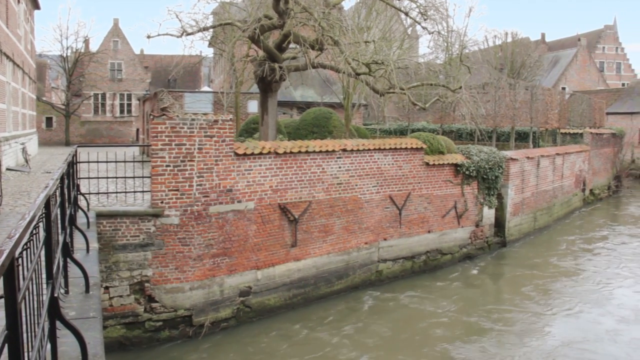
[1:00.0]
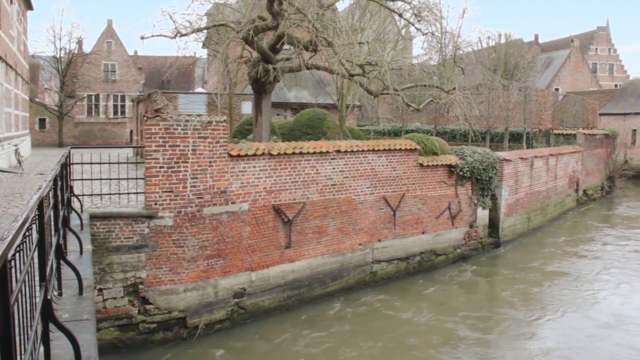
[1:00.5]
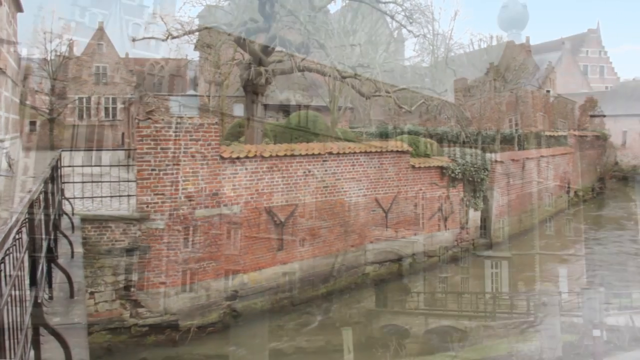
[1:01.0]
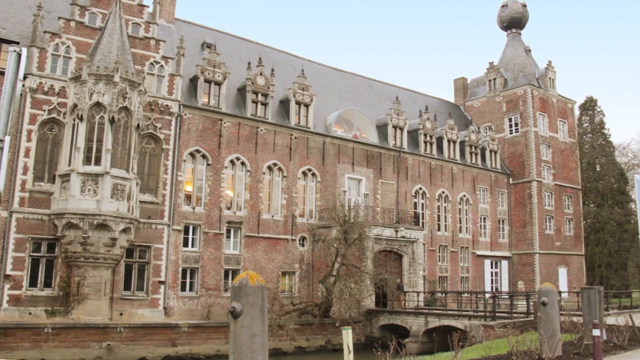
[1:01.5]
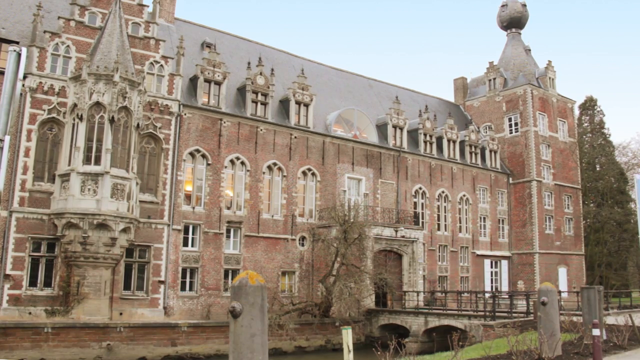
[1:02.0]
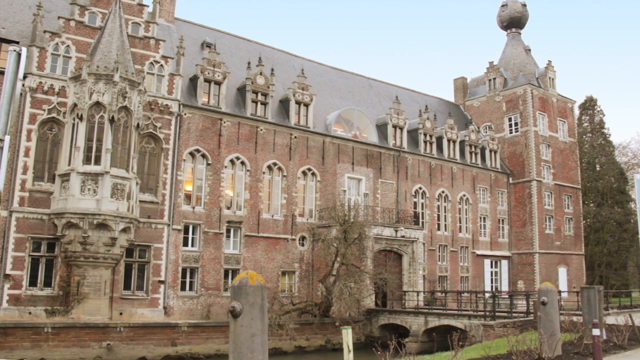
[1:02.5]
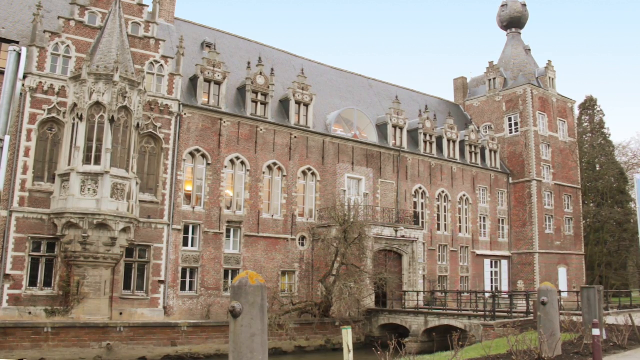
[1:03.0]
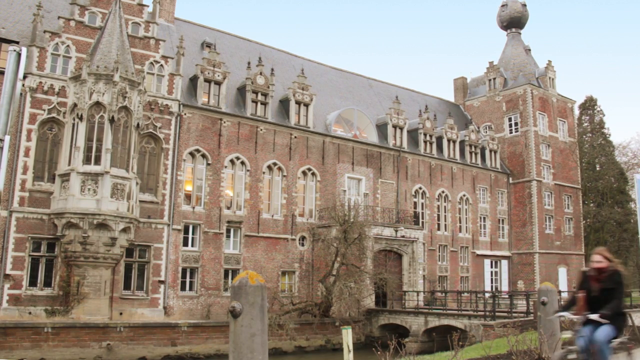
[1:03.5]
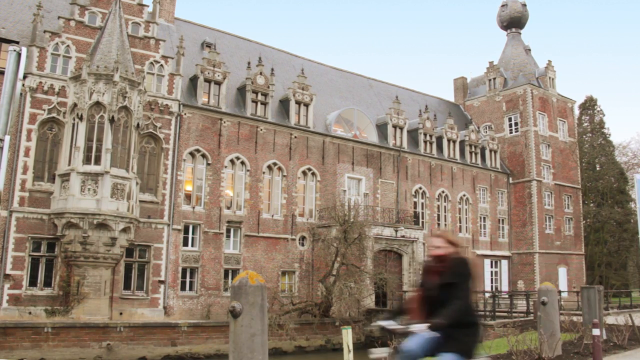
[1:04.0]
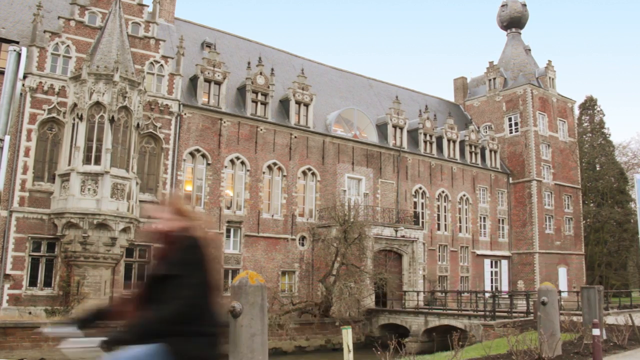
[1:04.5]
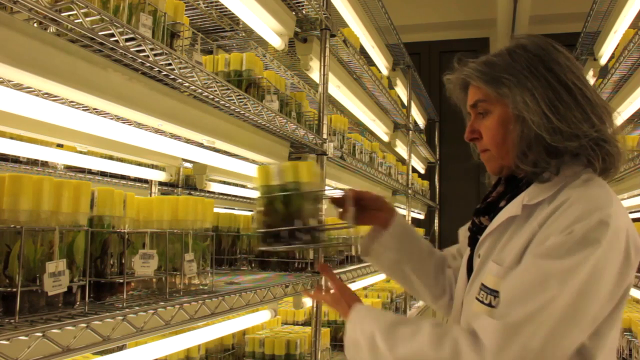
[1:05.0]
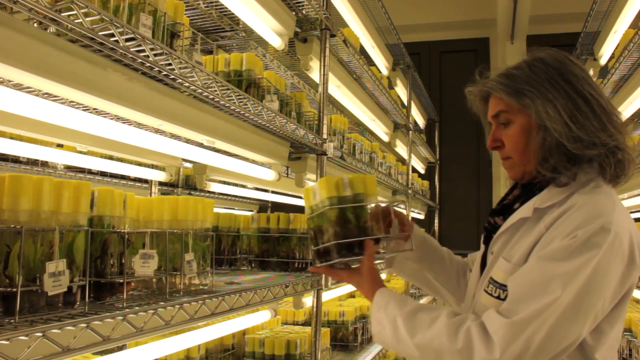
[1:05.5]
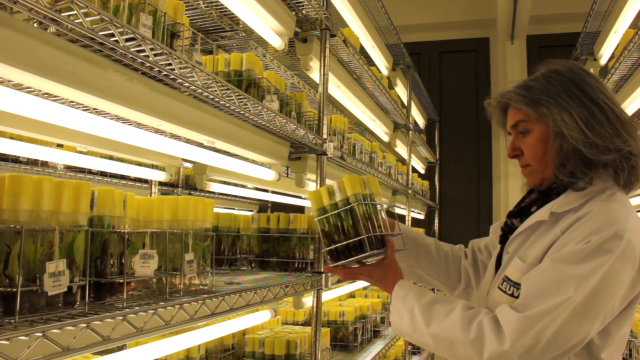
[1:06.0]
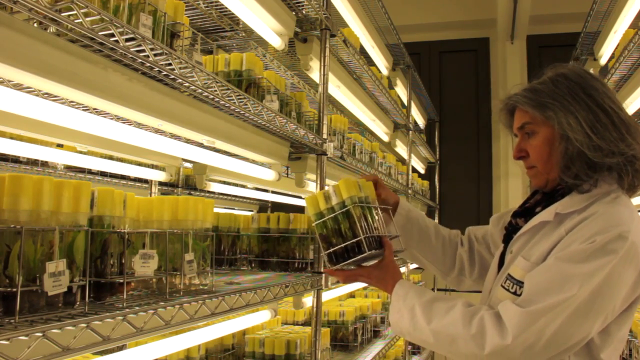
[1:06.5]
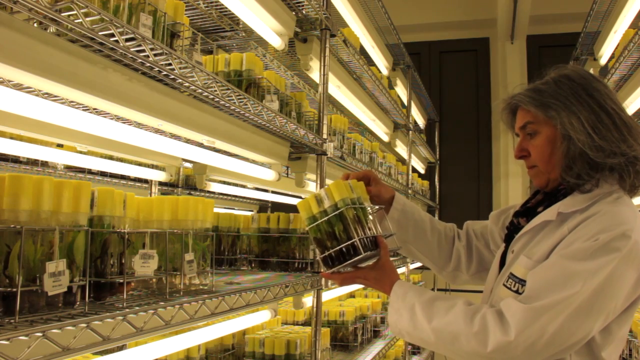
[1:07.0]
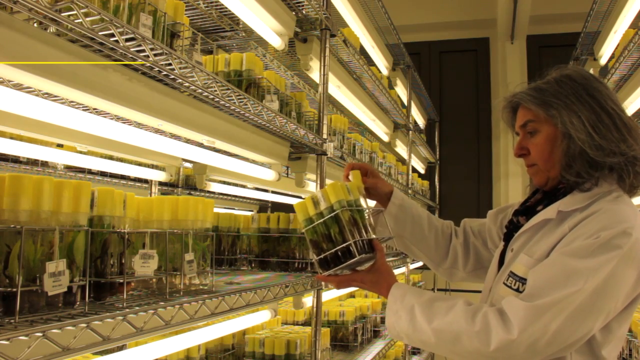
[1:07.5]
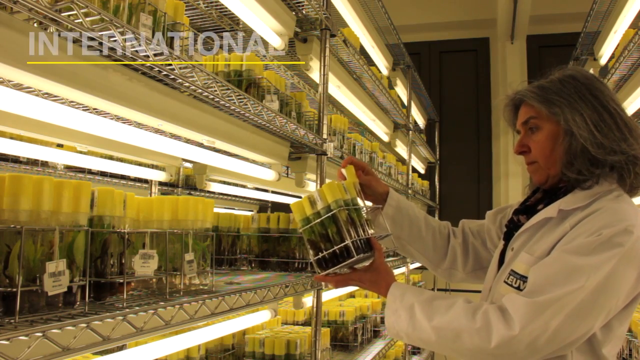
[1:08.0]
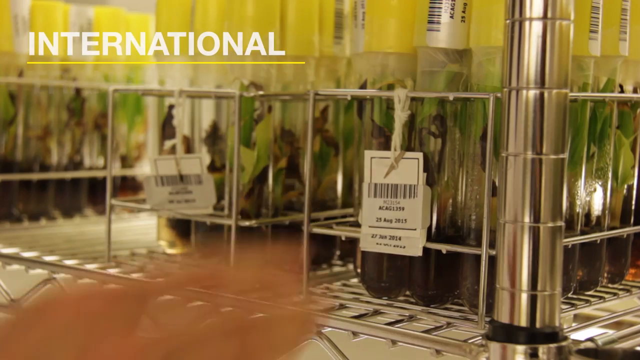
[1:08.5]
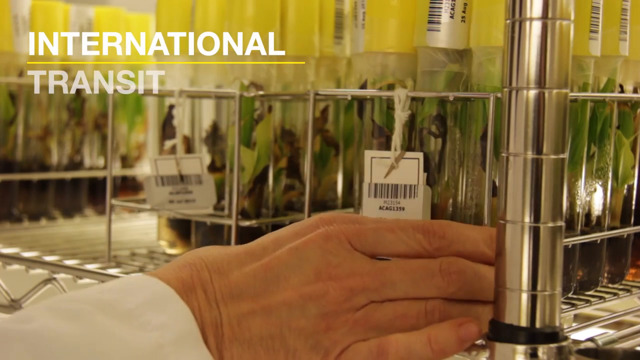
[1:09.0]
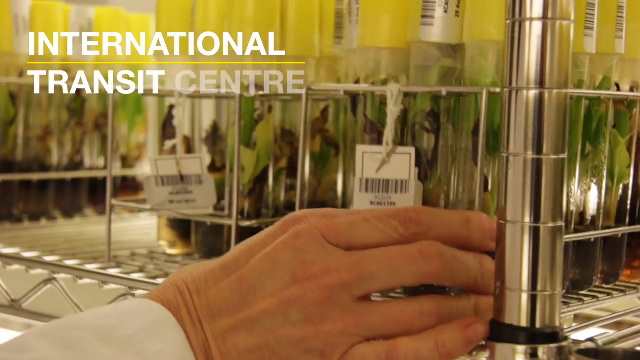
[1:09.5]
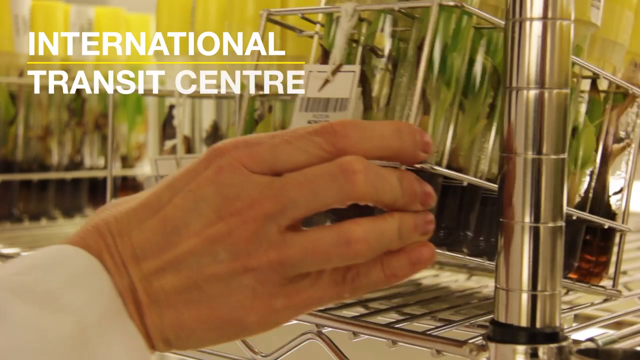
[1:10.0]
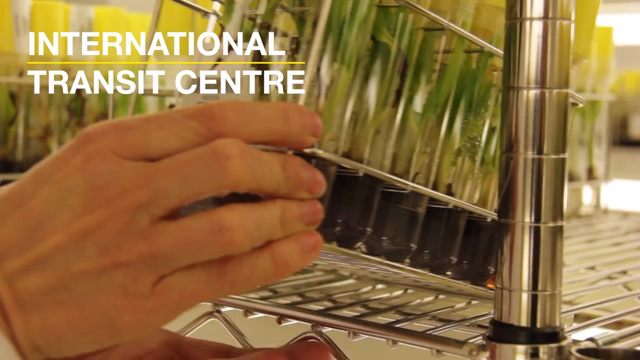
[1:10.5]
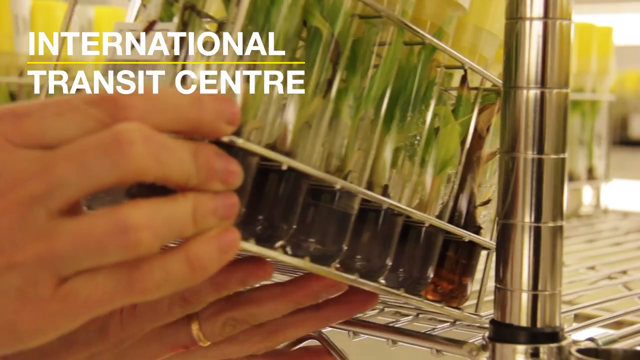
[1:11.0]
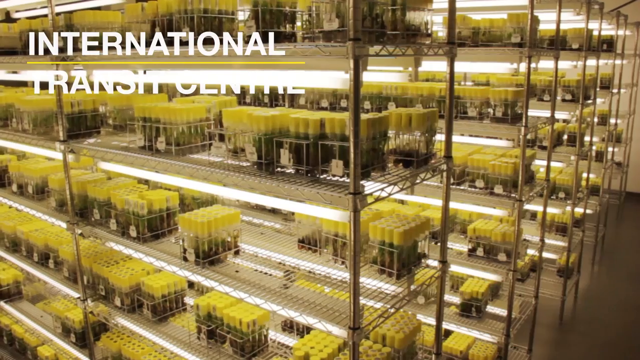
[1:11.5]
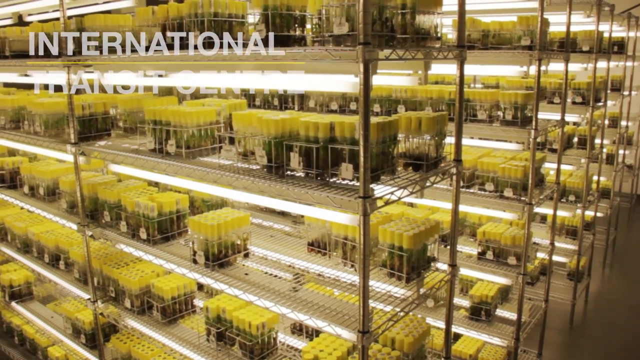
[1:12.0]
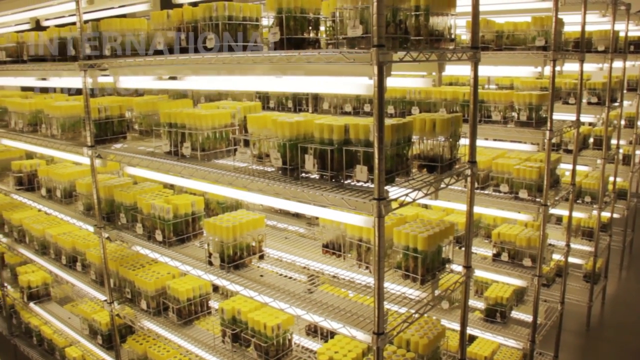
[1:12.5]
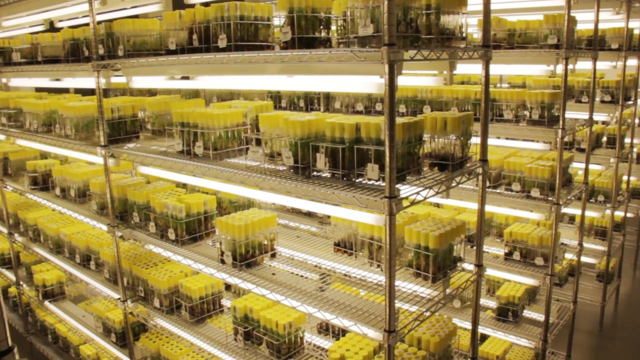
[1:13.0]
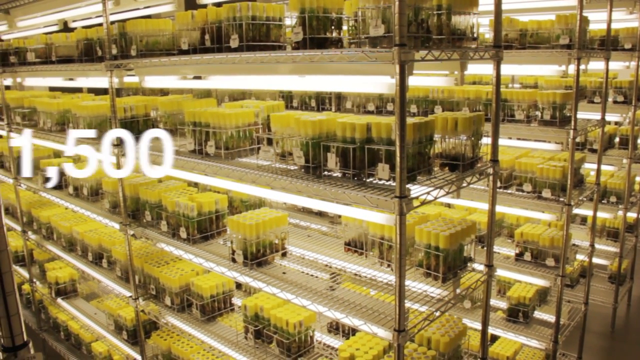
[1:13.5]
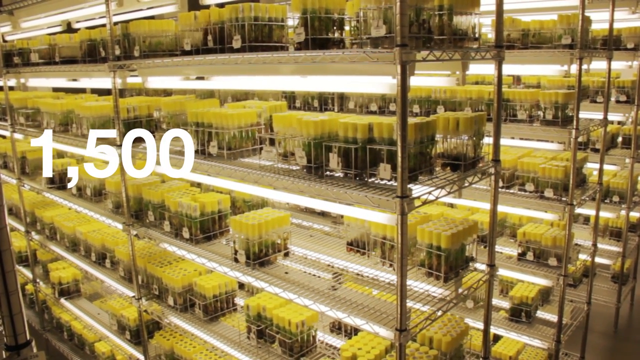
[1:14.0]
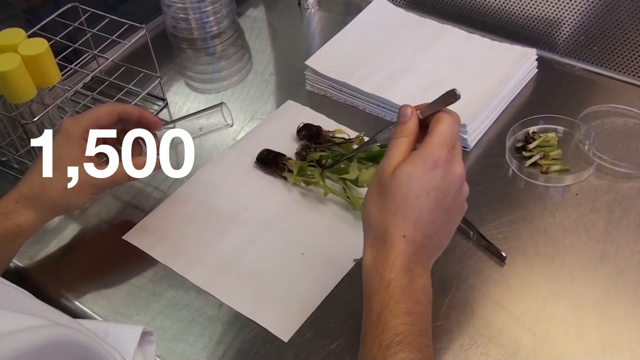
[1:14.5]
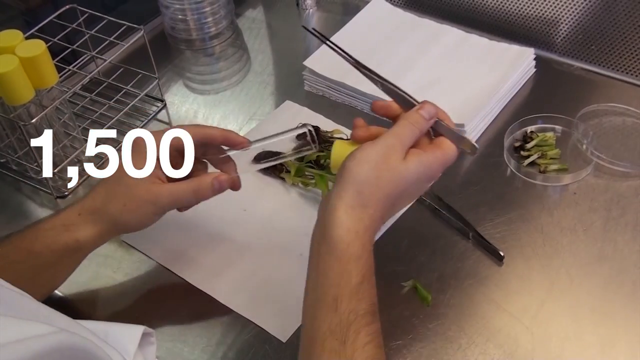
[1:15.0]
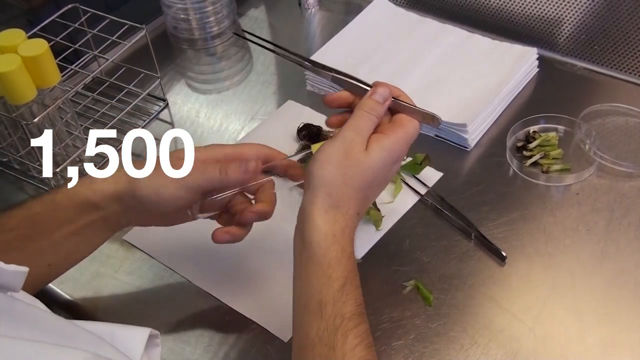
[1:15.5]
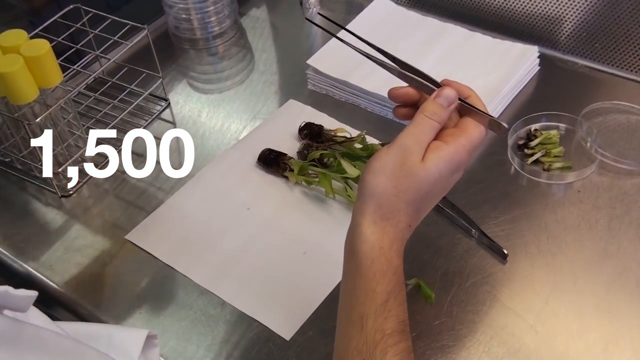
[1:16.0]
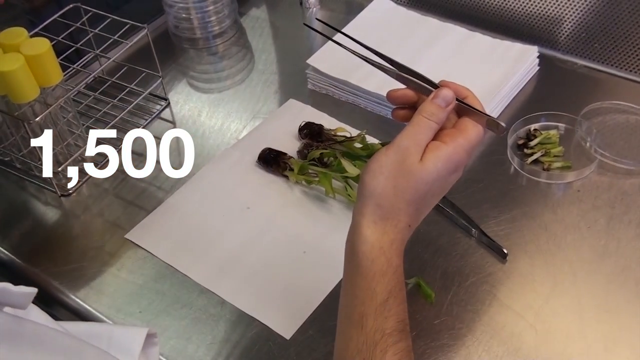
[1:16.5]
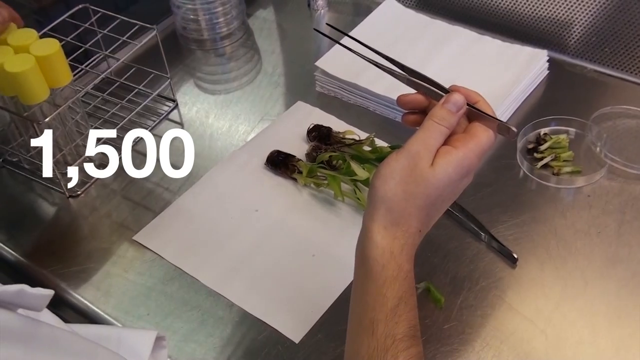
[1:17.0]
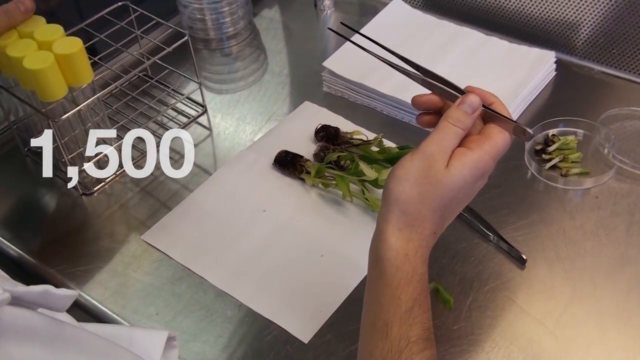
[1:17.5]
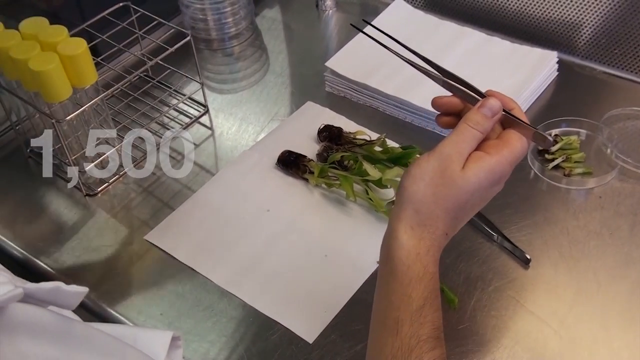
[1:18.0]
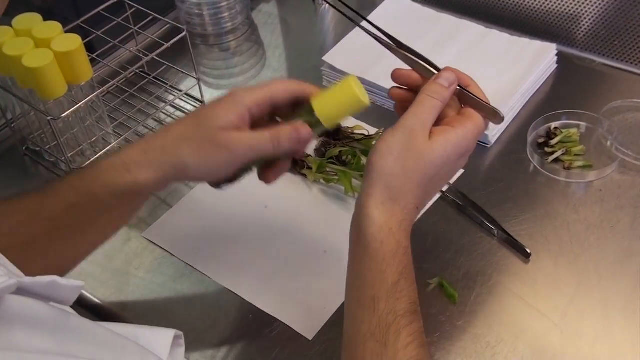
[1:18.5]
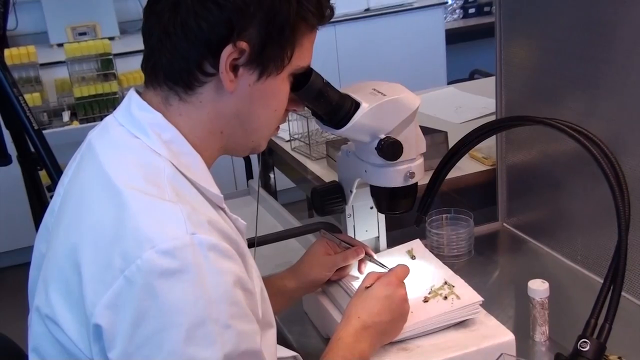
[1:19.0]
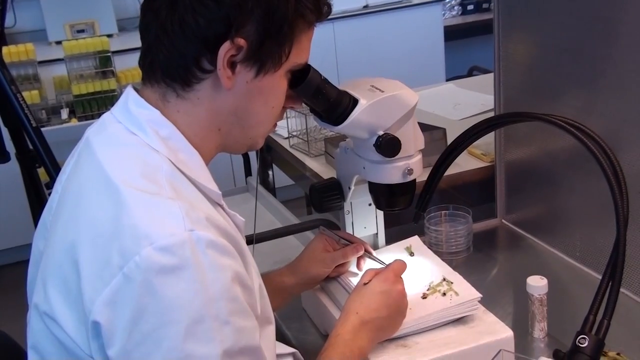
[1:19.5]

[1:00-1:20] The dam is shown with water flowing through, then the view zooms out to a large building with some clocks and things on top. Next, a woman who appears to be a scientist, with gray hair and a lab coat, picks up a metal tray that looks to be holding yellow vials; many of these metal trays with yellow vials are stacked on multiple rows in the facility. She appears to inspect the tray, looking around it, then pulls one vial out. A close-up shows her hand pulling another tray out, and the words "International Transit Center" appear on the screen. She pulls out the full case of vials, and the number "1500" appears on screen with no words following it. The scientist is then seen working with the vials in what may be a lab.